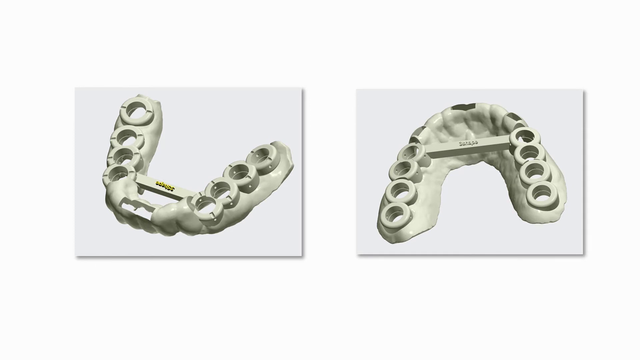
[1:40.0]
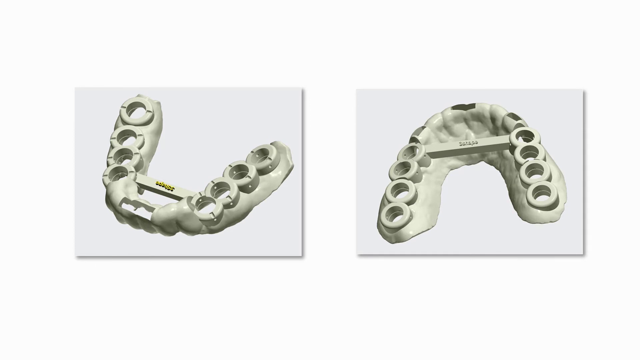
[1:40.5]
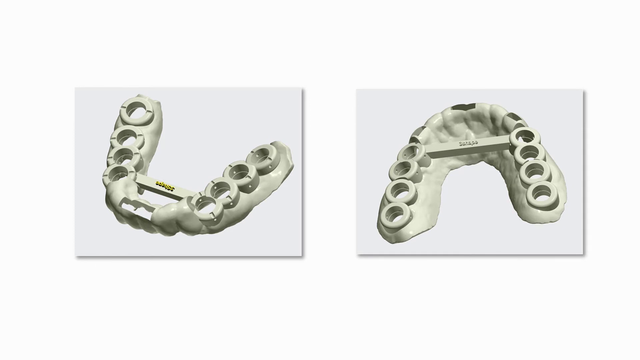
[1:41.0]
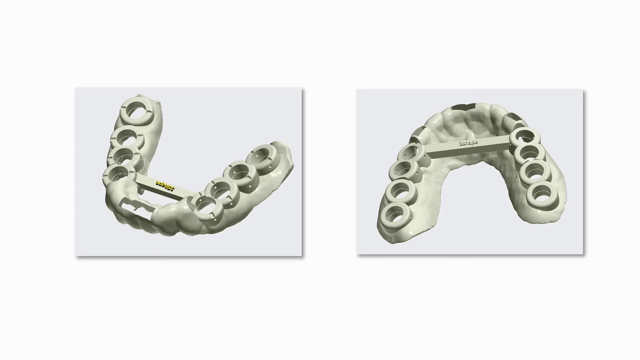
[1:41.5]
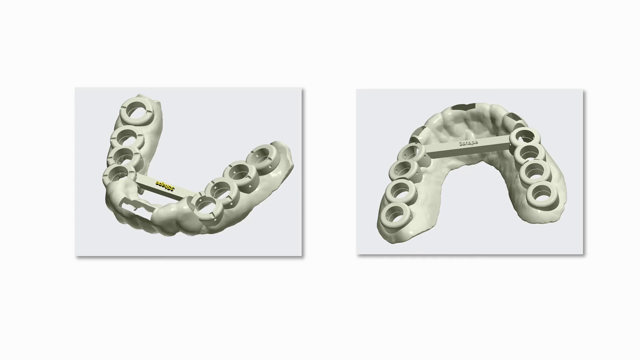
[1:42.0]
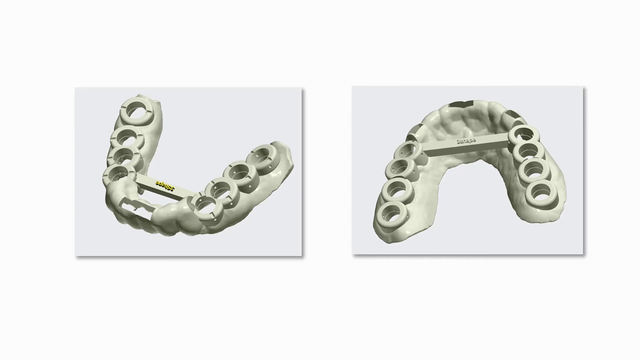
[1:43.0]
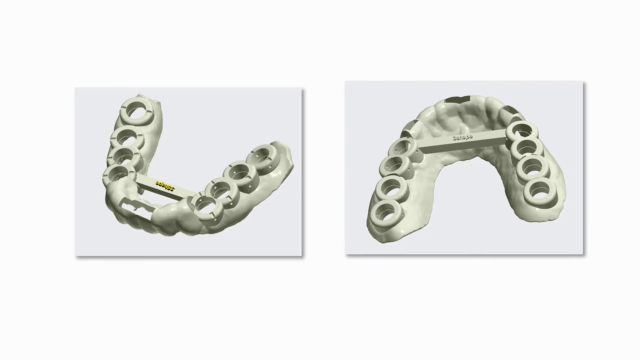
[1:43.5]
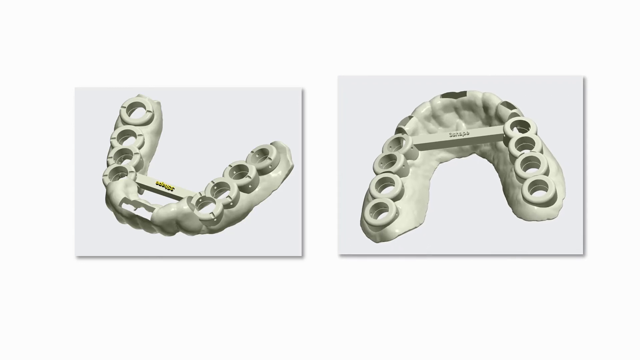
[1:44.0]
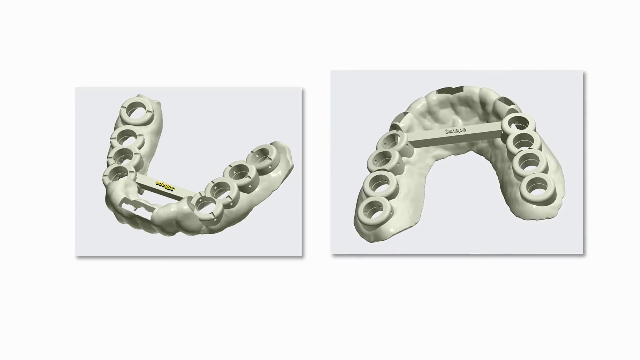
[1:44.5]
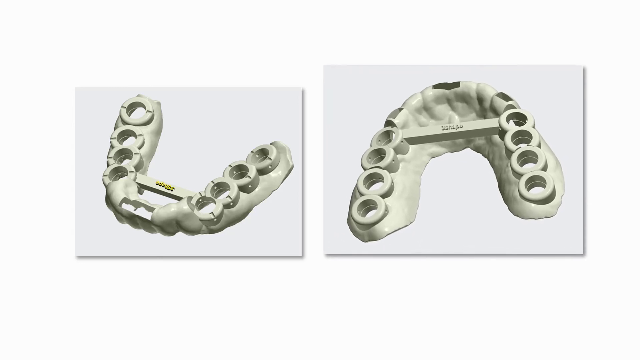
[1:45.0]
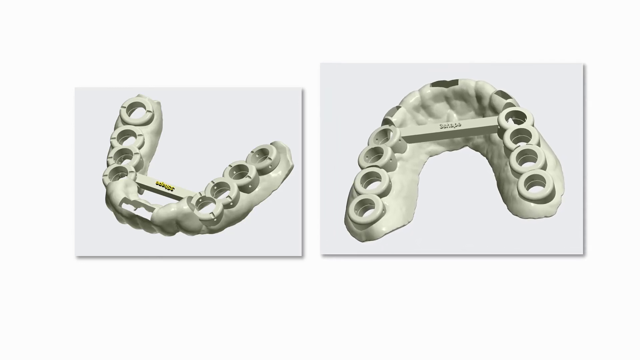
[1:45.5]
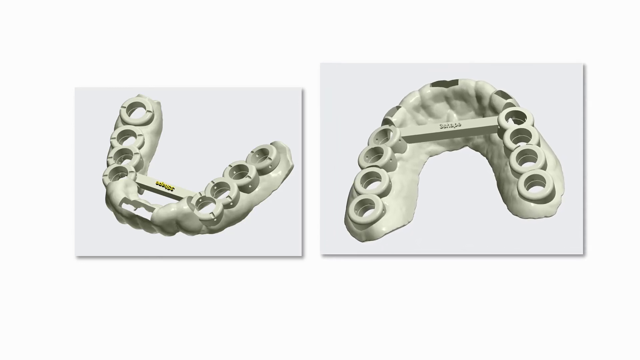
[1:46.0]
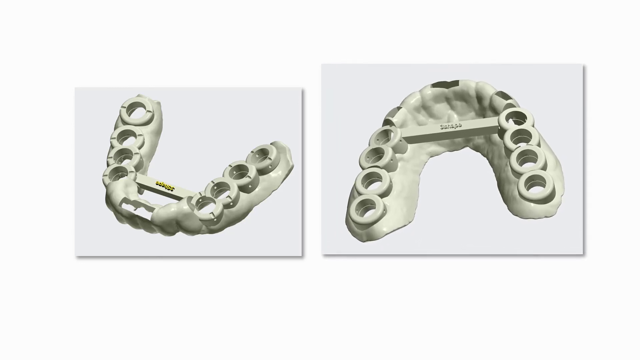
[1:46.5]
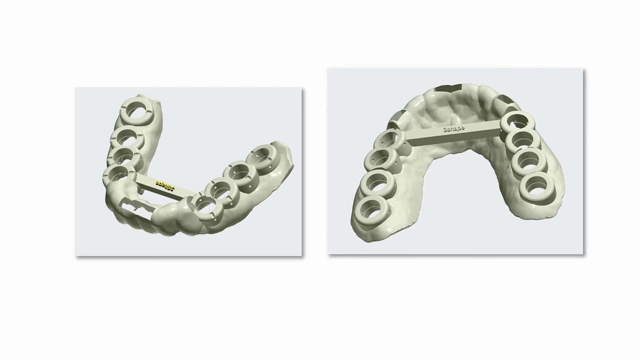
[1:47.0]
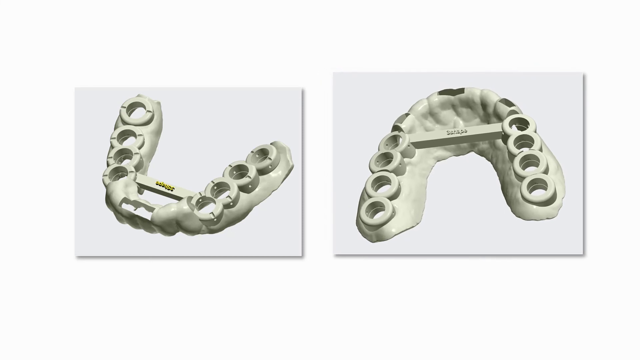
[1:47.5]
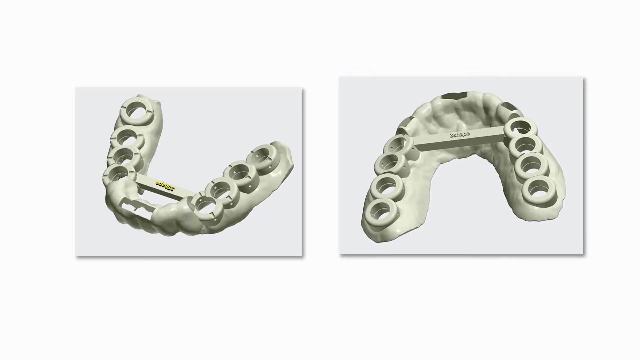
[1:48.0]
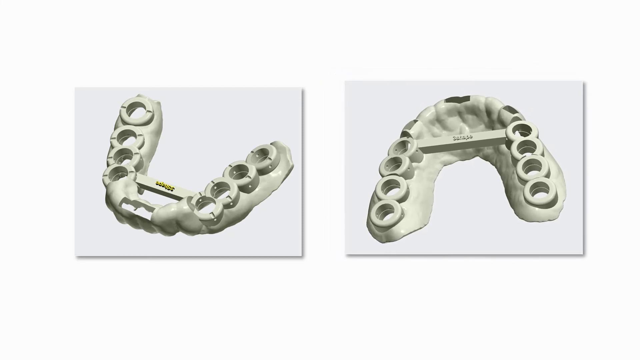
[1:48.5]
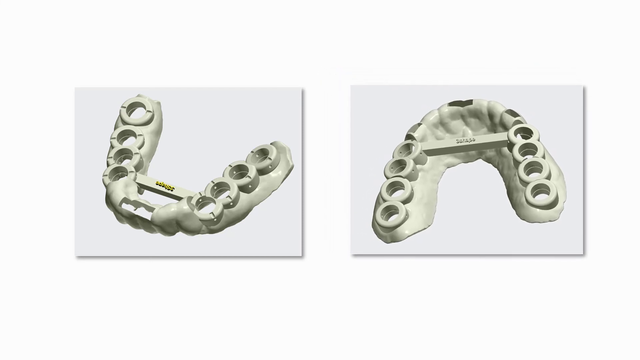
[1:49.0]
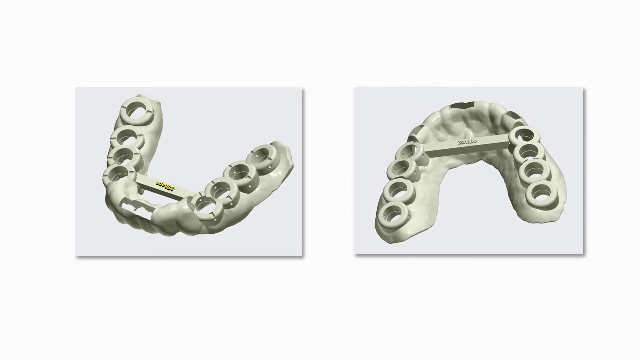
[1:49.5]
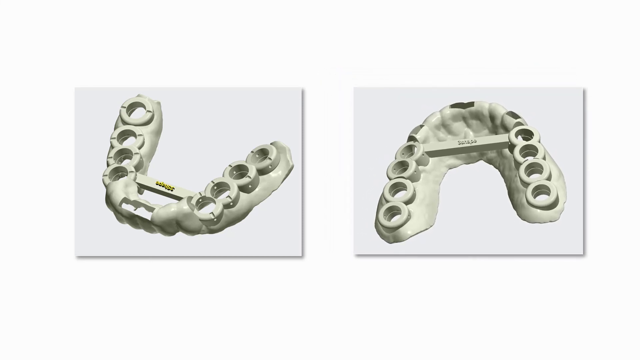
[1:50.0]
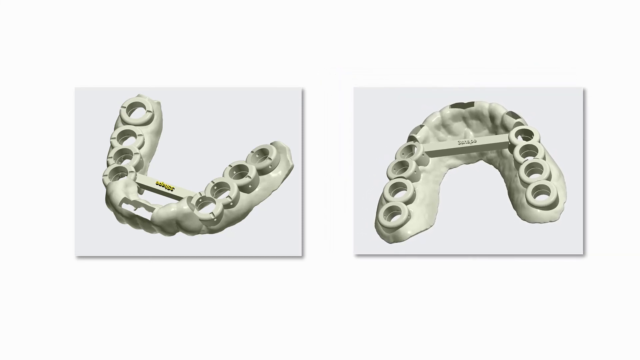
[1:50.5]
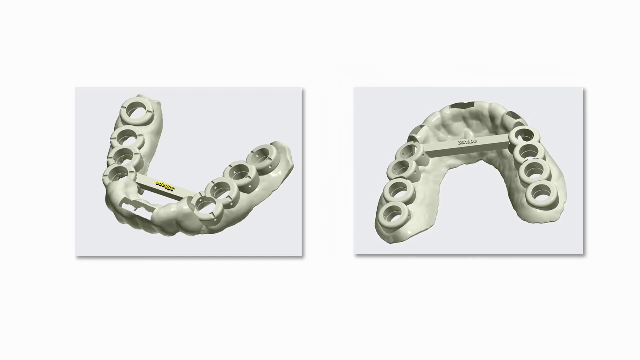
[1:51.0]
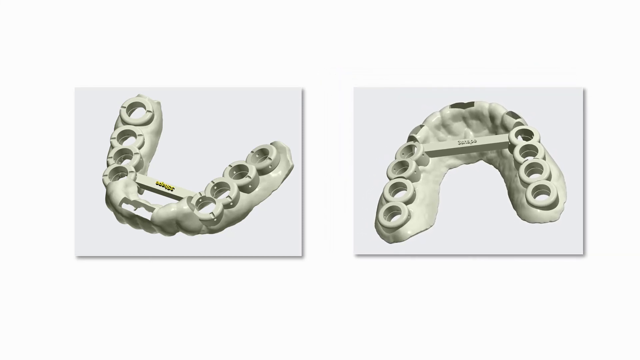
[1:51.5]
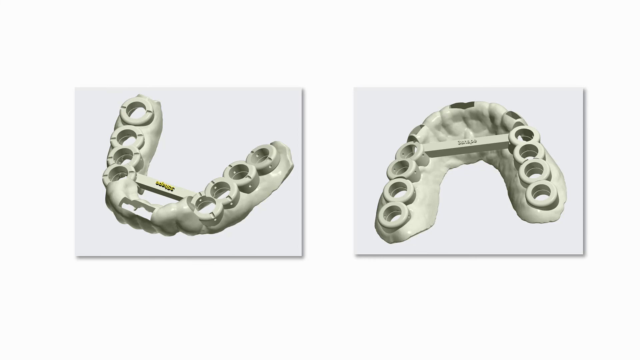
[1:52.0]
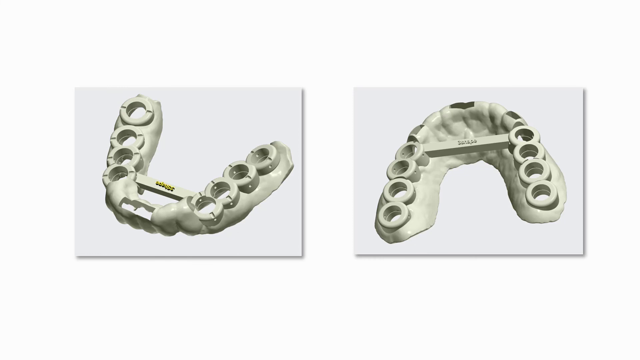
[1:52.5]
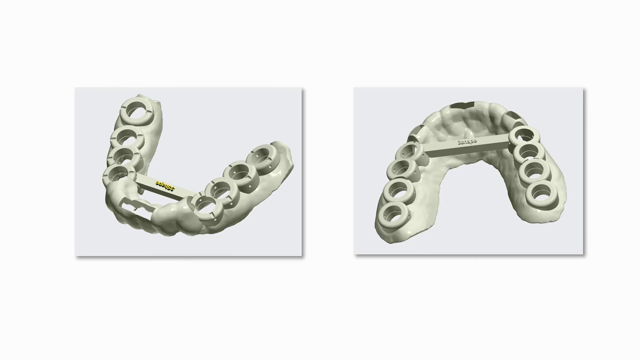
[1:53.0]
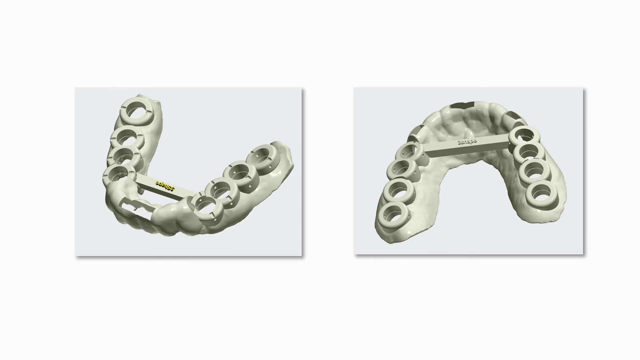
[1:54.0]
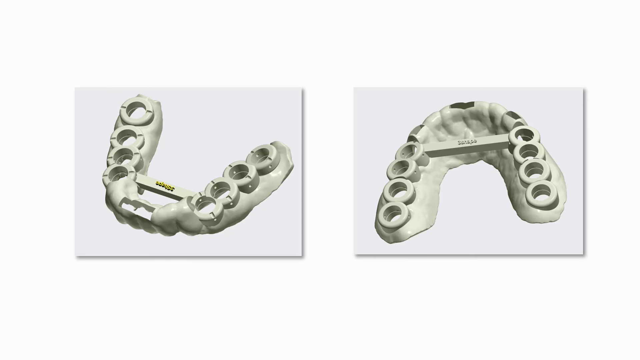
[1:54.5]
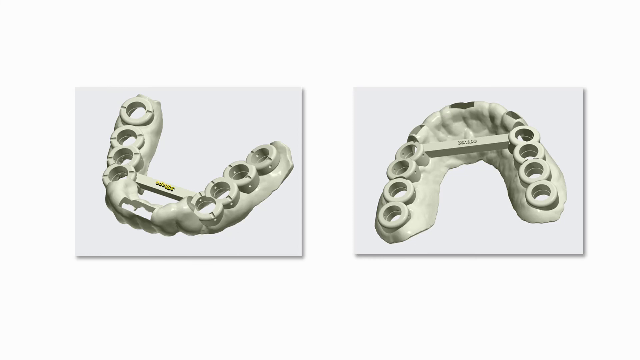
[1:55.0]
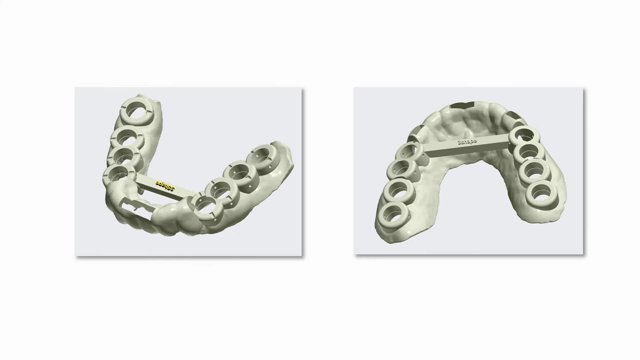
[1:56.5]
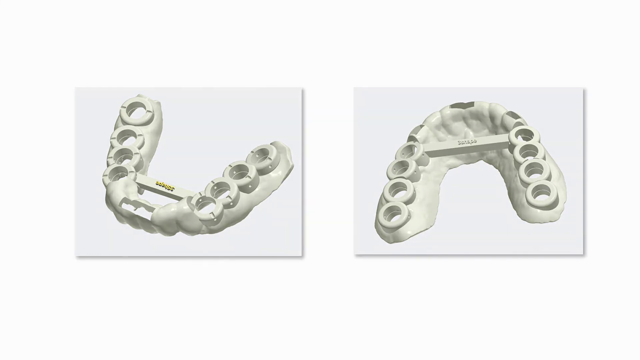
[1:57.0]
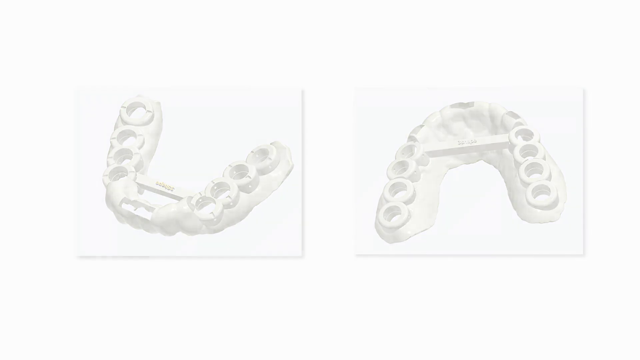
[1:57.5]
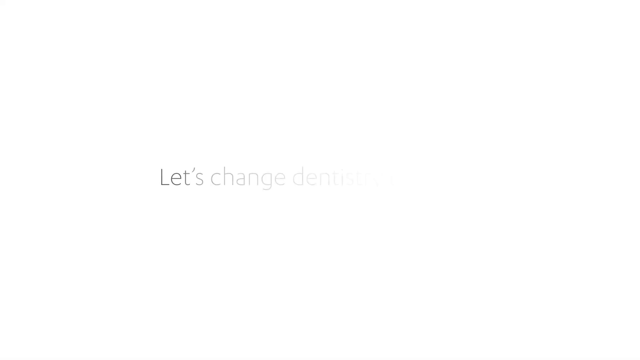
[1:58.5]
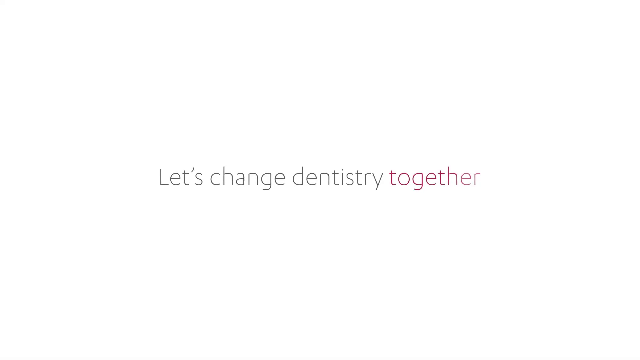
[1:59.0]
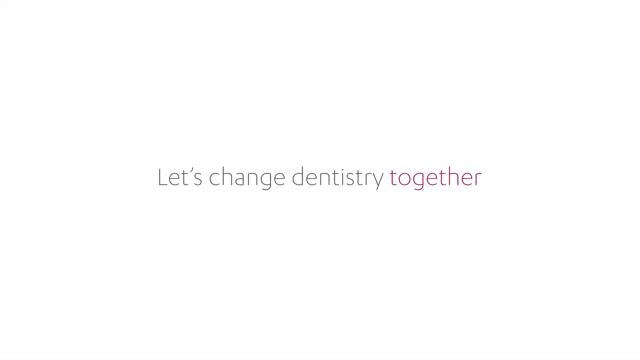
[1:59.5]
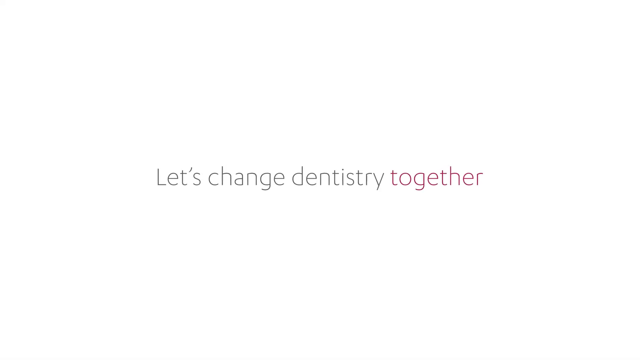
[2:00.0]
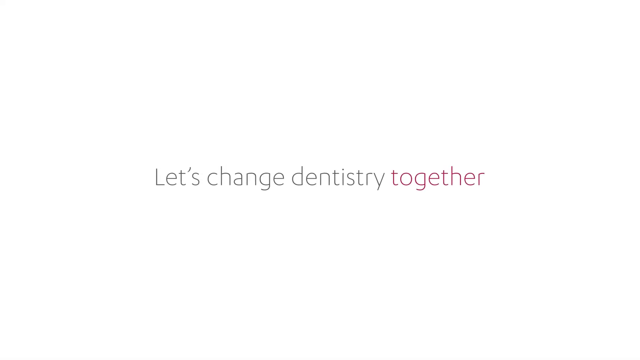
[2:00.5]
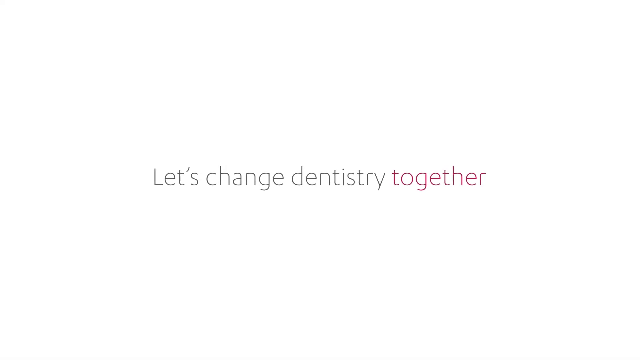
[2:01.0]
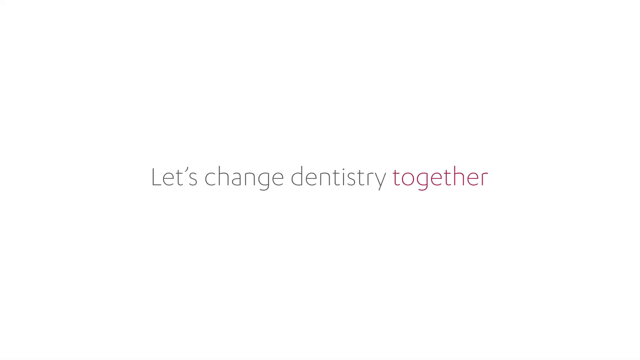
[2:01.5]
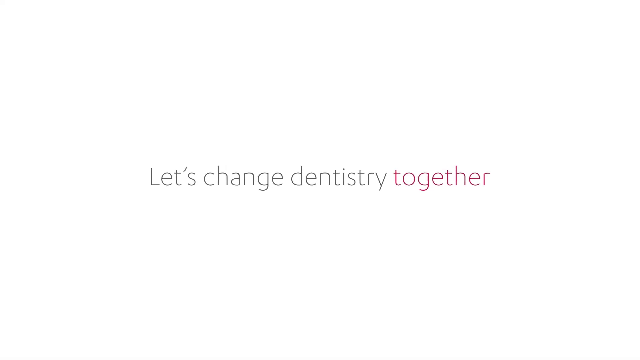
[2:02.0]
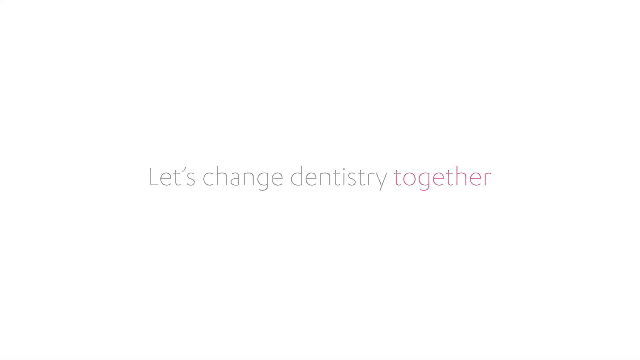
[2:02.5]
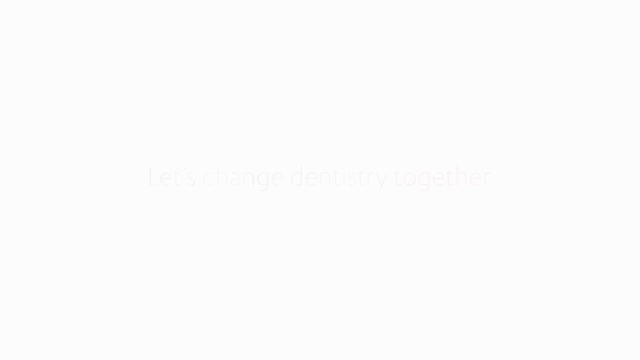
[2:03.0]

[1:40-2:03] The two mould images remain until the mould on the right very slowly grows larger, becoming bigger than the mould on the left, and then slowly returns to its original size. The image then stays the same. The moulds show the detail of the teeth and of the veins and things inside the gums, as well as the ridges of the gums themselves. The moulds are a dark white colour, and there is perhaps a company logo on the bar that rests between the two sets of teeth. Gradually the mould images fade out, leaving a white background. Text then slowly appears in the centre from left to right: "let's change dentistry together", with "let's change dentistry" in black and "together" in red. The image slowly zooms in before the screen goes blank.